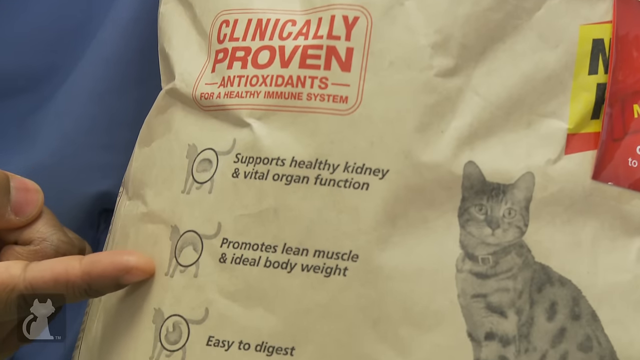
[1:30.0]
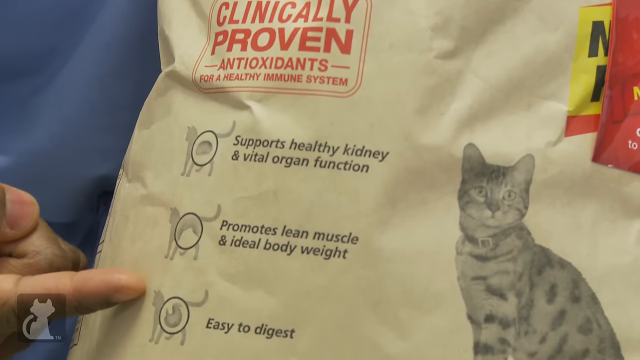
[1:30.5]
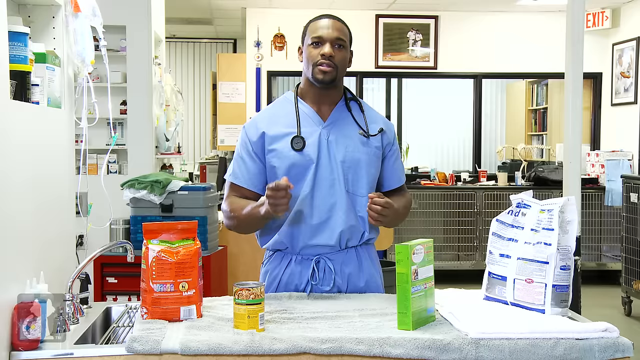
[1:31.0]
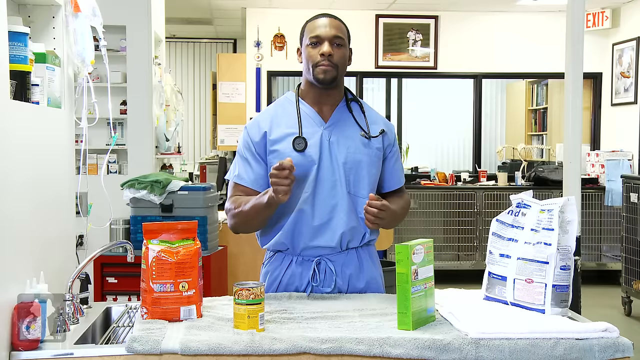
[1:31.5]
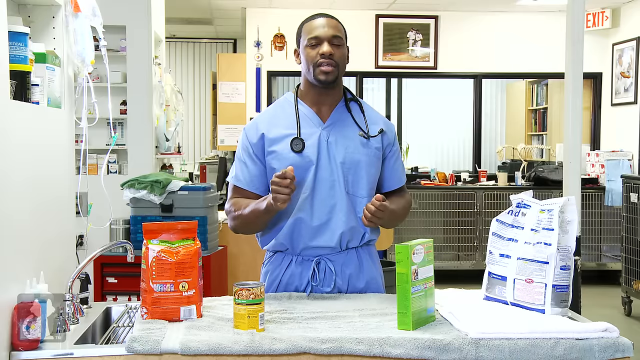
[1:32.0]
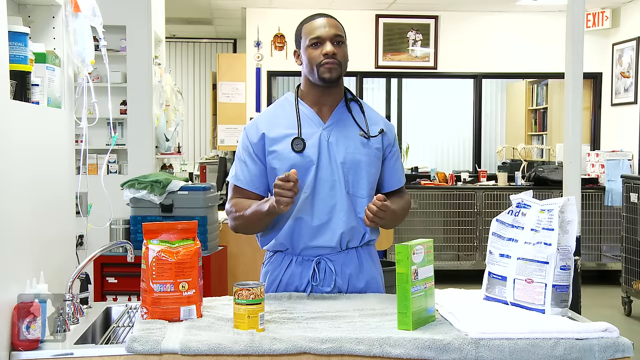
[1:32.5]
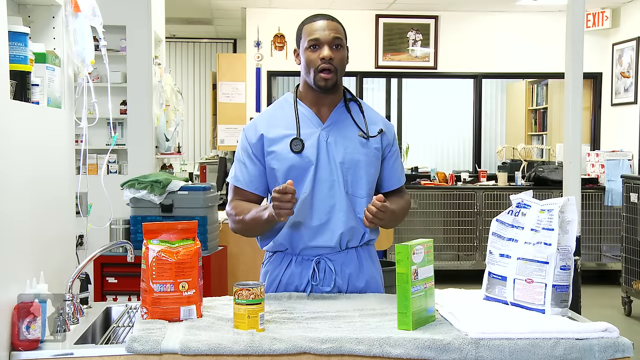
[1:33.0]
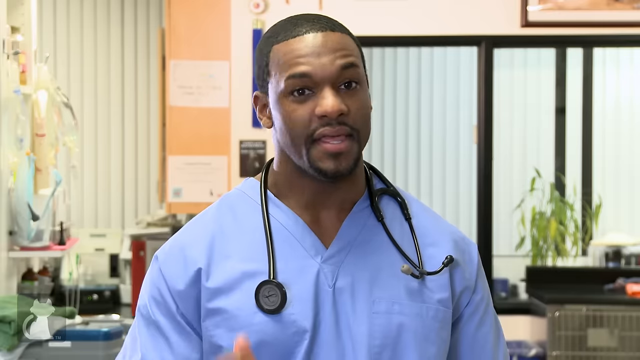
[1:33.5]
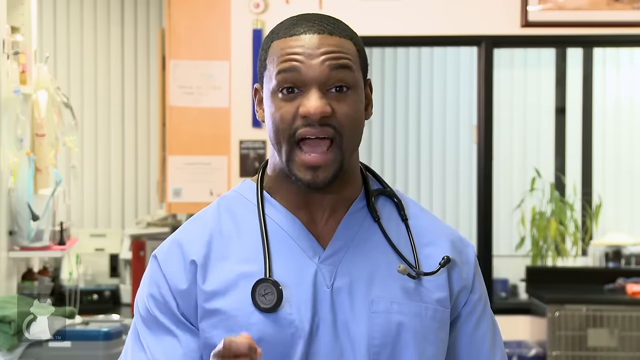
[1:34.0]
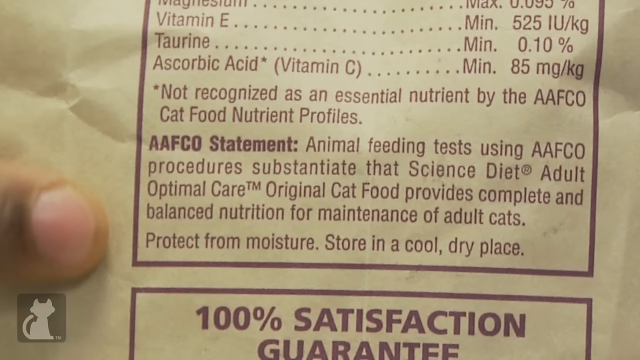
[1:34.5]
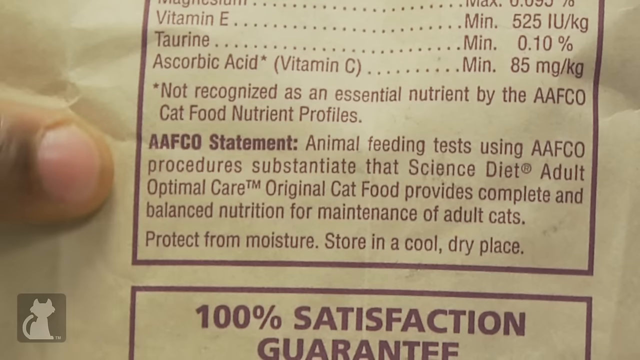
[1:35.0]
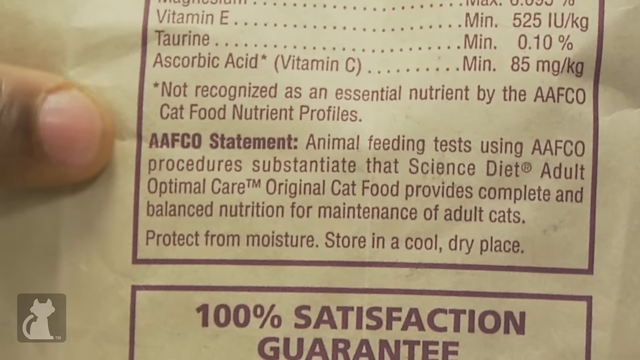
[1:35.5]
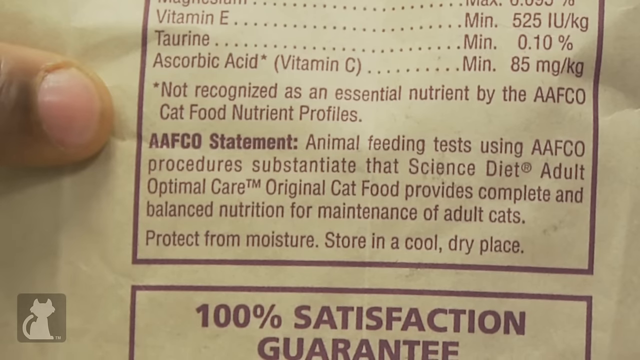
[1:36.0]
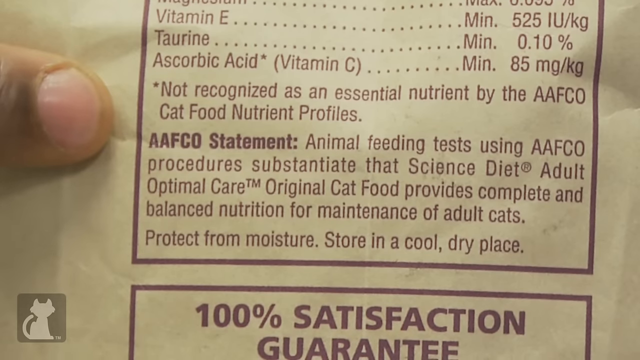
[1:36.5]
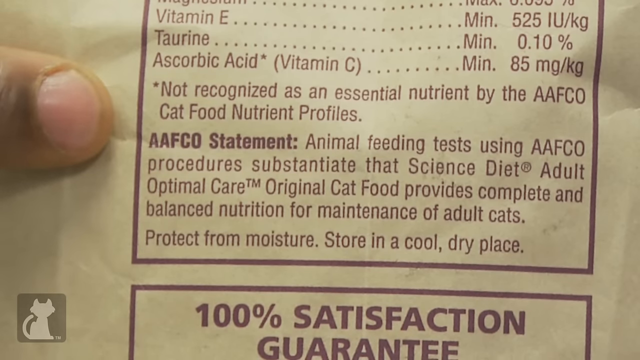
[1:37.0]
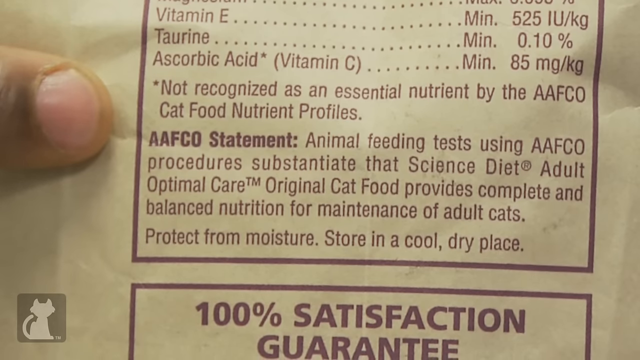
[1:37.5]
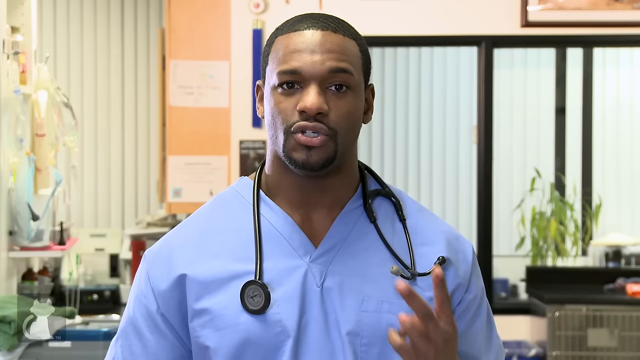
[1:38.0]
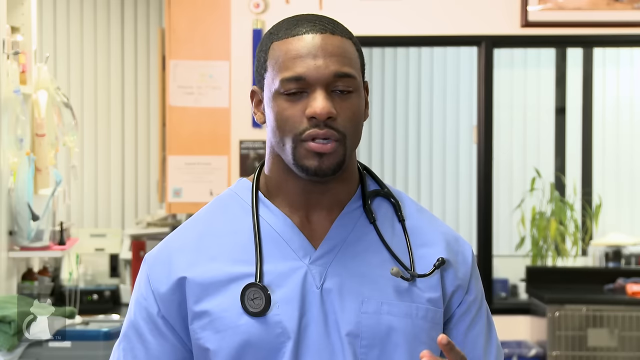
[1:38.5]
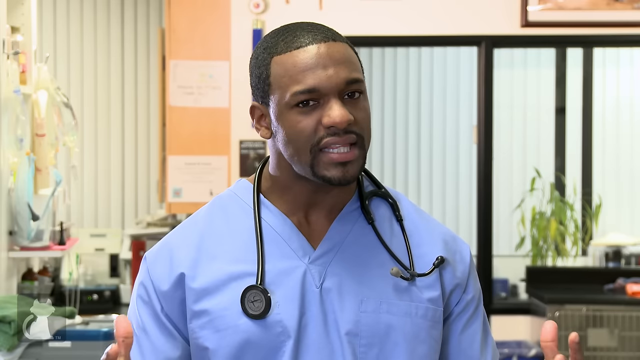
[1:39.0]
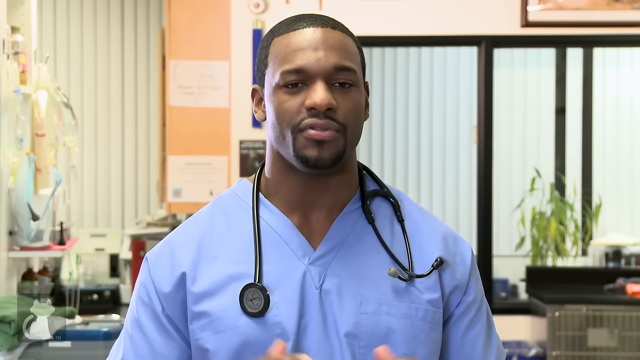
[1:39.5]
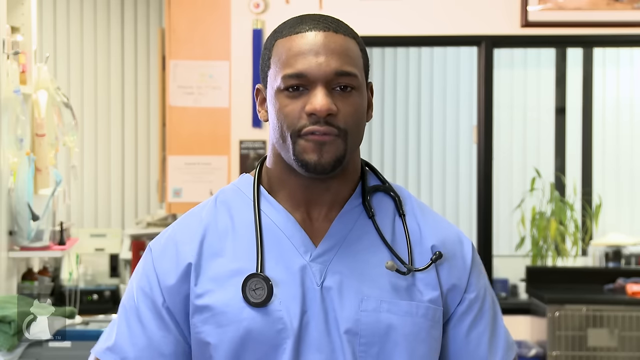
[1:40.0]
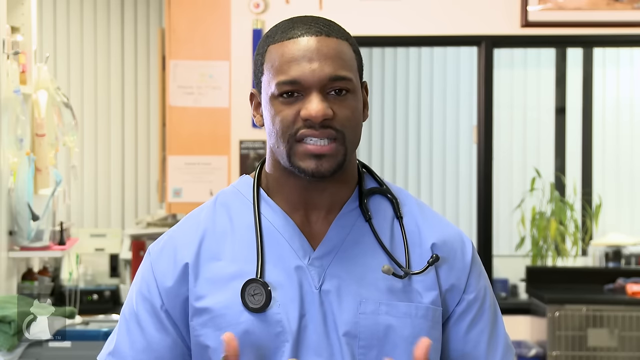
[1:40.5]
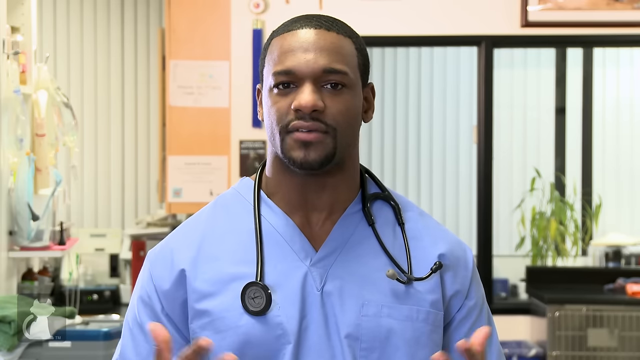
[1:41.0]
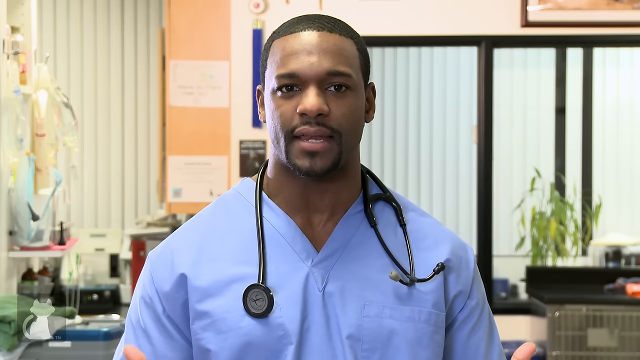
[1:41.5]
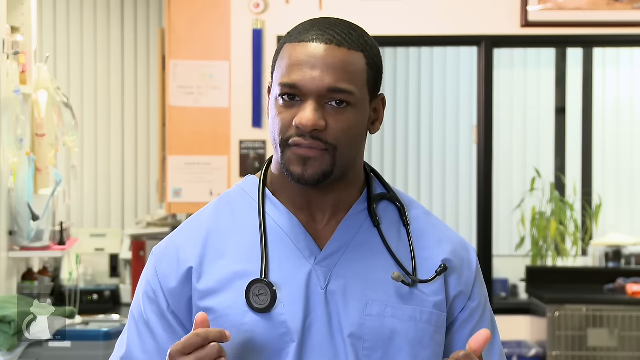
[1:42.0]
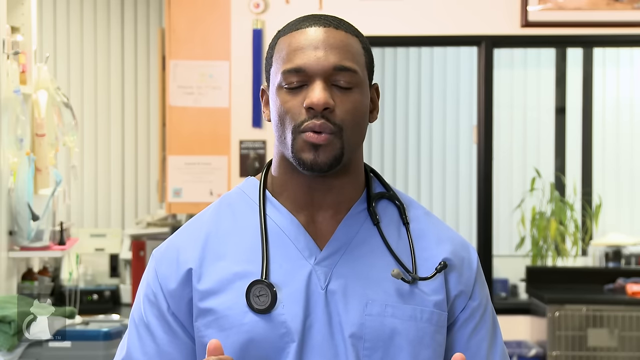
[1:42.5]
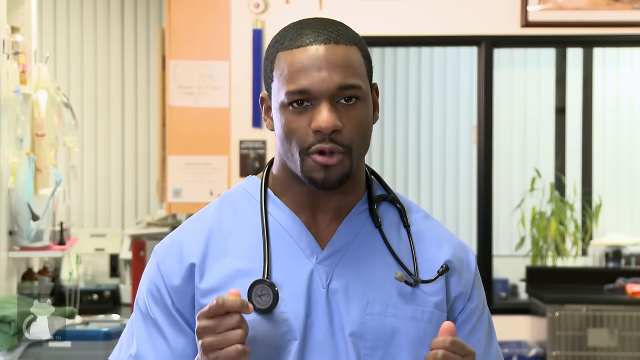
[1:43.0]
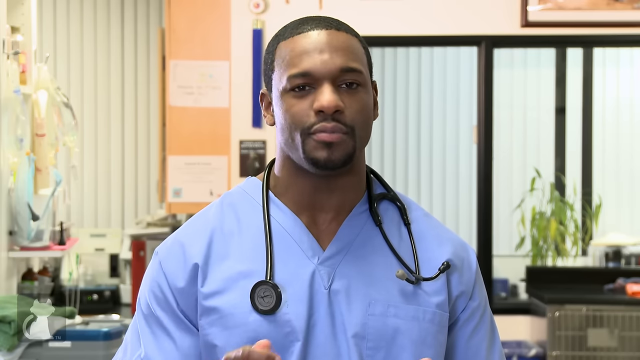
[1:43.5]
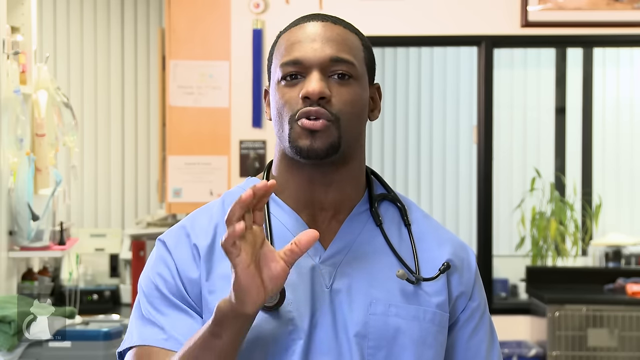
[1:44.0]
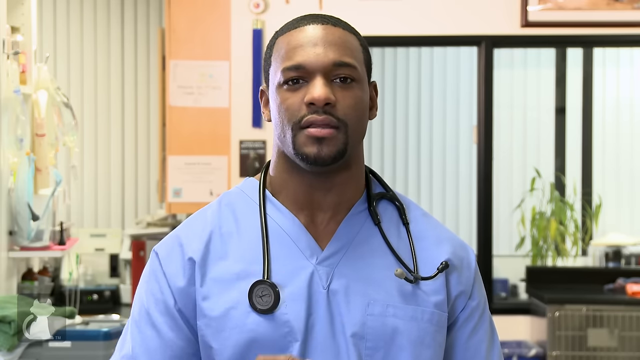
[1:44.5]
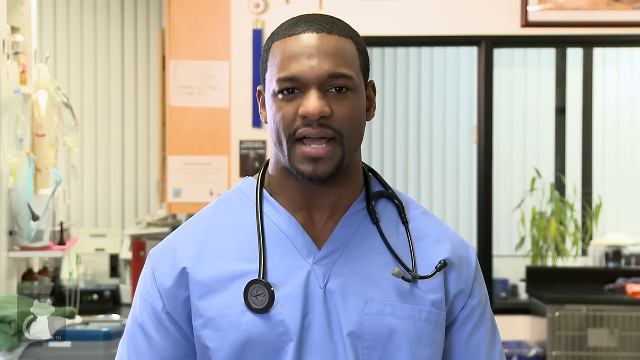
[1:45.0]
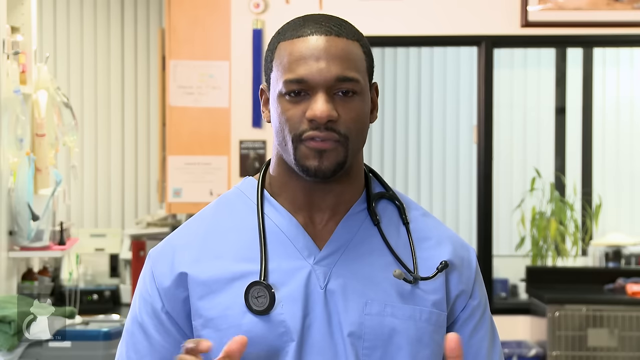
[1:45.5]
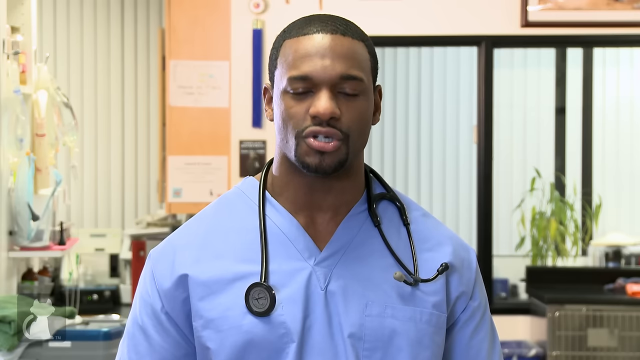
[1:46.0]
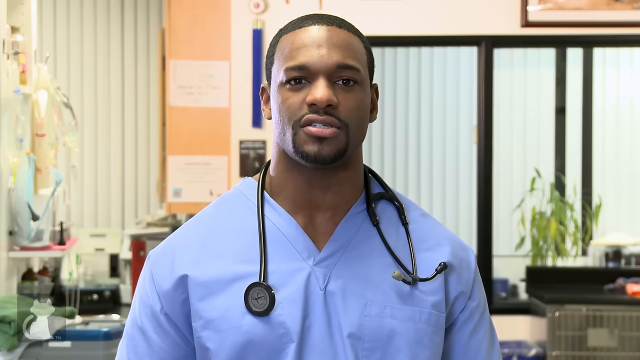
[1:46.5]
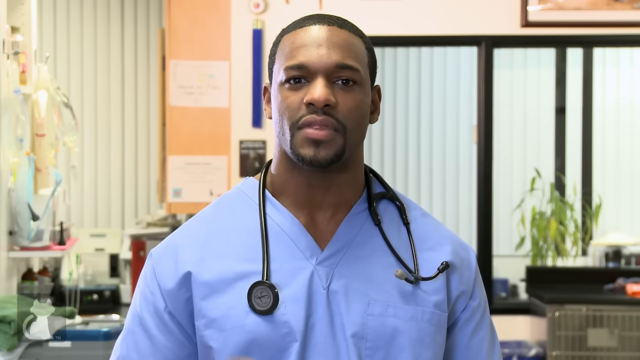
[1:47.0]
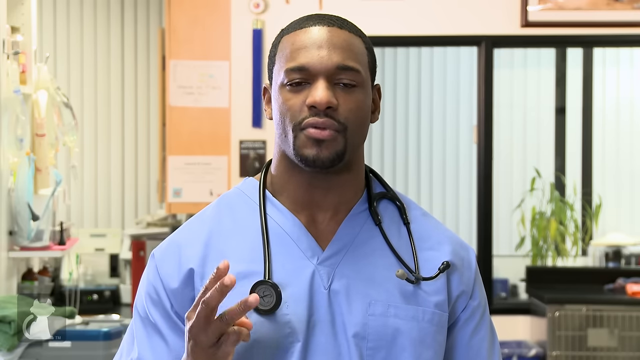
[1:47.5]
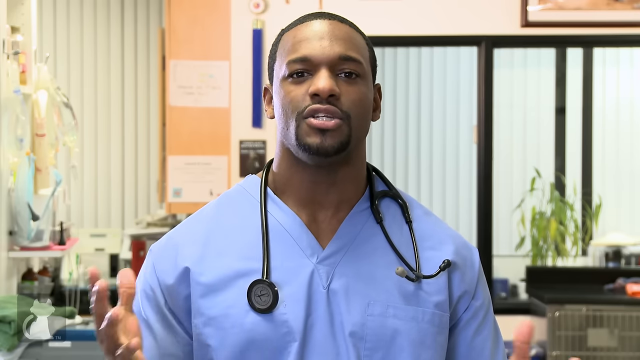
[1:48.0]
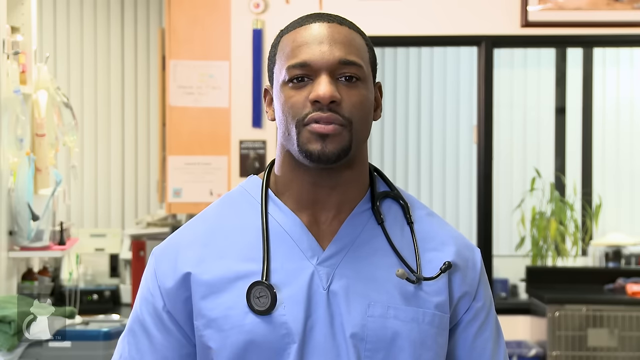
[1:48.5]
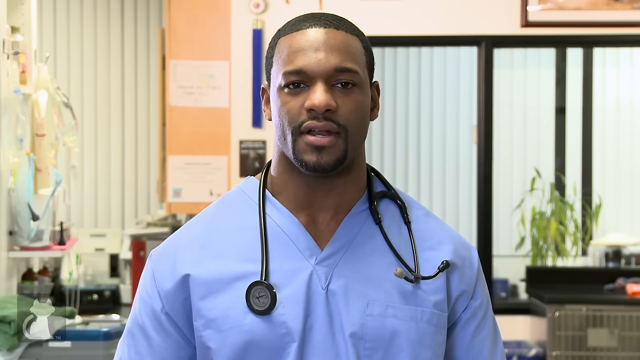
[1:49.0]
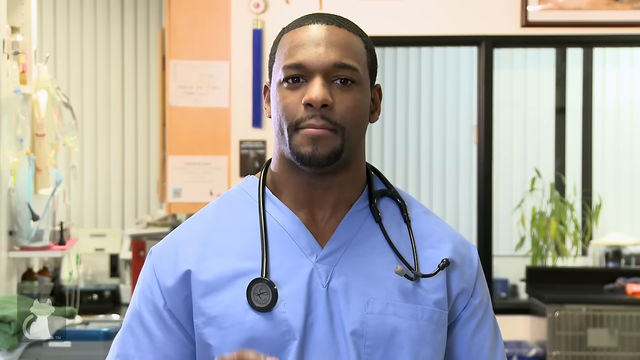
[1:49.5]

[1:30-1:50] A close-up shows the back of a flexi bag that looks like a bag of cat food. There is a drawing of a cat to the right side of the pack, which is a very light brown khaki shade. On the left side, written in red, is "clinically proven antioxidants for a healthy immune system." Written in black is "support healthy kidney and vital organ function," and below that, also in black, "promotes lean muscle and ideal body weight." A finger skims down along each of those claims. Next, a man dressed in blue scrubs stands behind a table as he speaks, his black stethoscope draped around his neck. The camera then zooms in to show him from the head to the chest, and he shakes his head as he continues speaking. Then the back of the food pack appears again, showing supplement information with vitamin levels, including vitamin E, taurine and ascorbic acid. The AAFCO statement is also visible, beginning "animal feeding tests using AAFCO procedures substantiate that," along with "original cat food provides complete and balanced nutrition for maintenance of adult cats" and "Protect from moisture, storing in a cool, dry place." A brown fingertip runs slightly upwards alongside the statement.